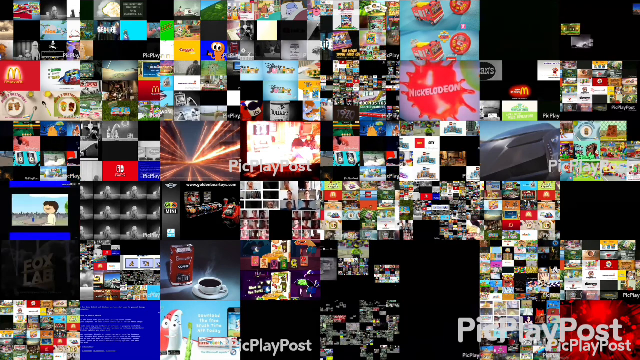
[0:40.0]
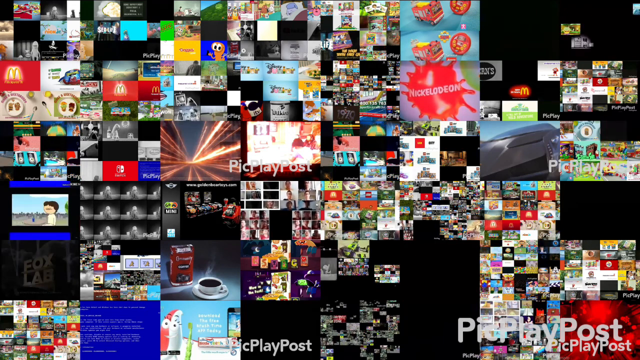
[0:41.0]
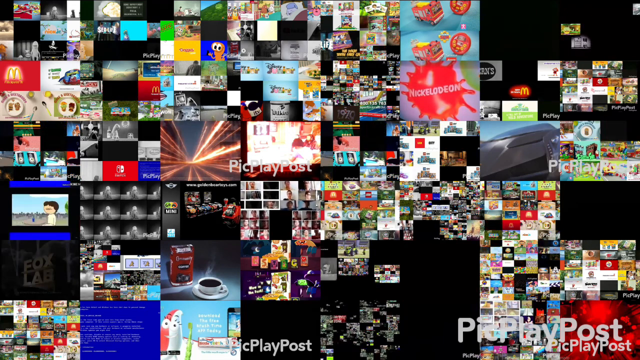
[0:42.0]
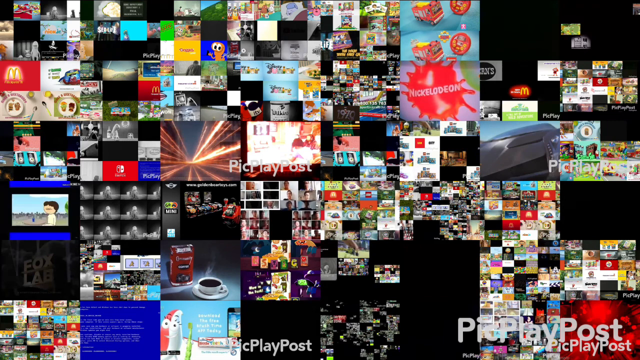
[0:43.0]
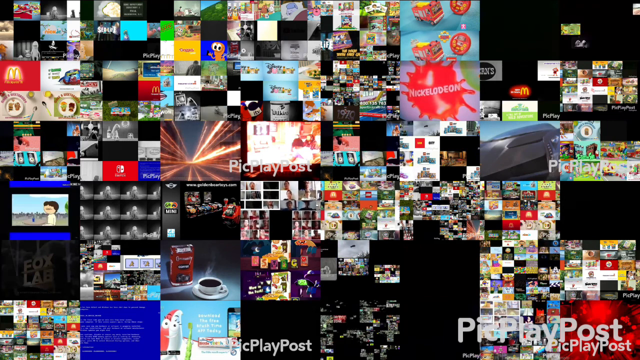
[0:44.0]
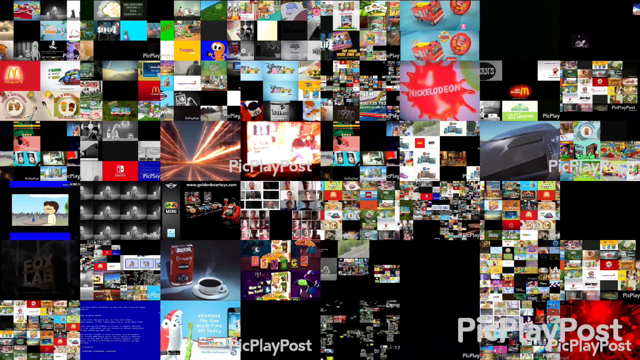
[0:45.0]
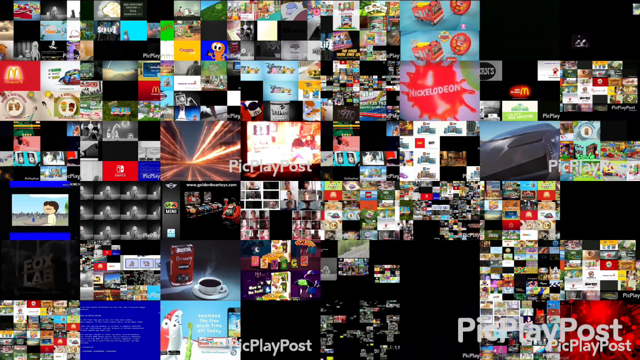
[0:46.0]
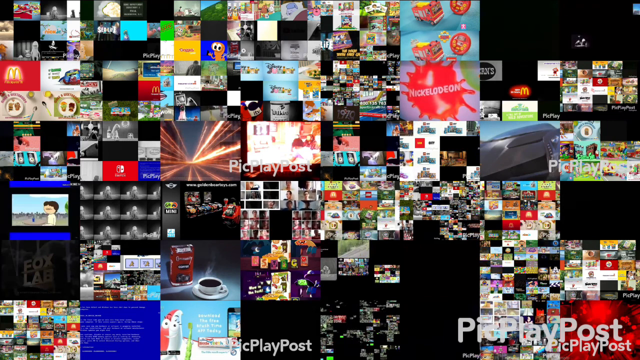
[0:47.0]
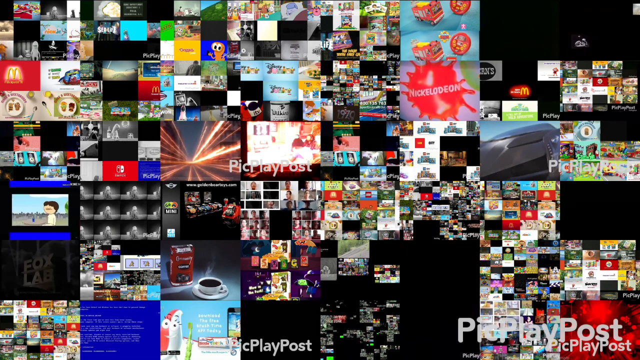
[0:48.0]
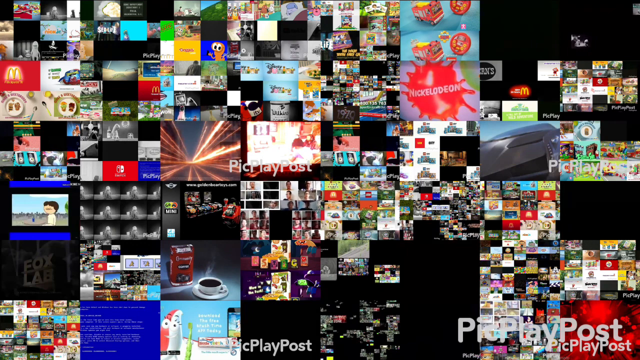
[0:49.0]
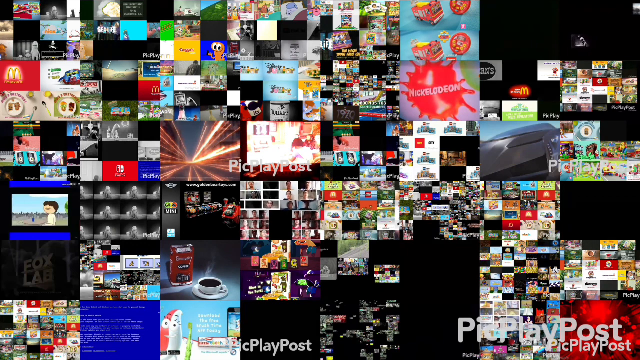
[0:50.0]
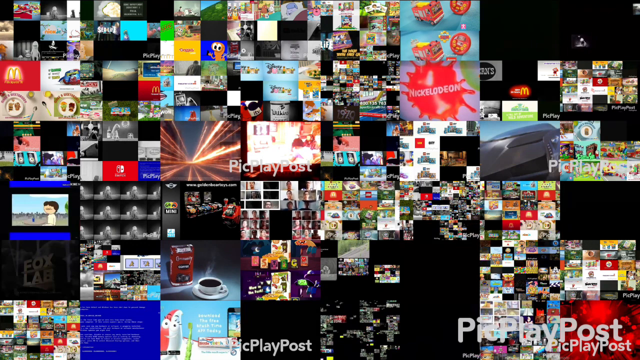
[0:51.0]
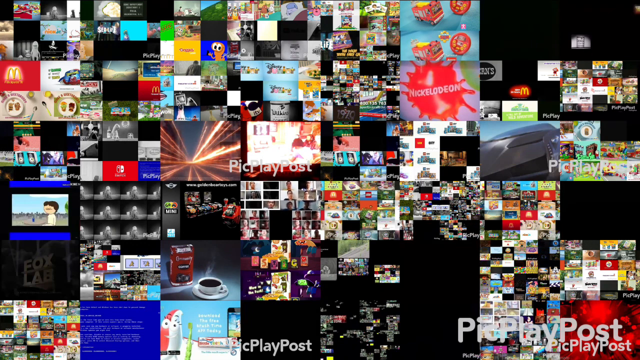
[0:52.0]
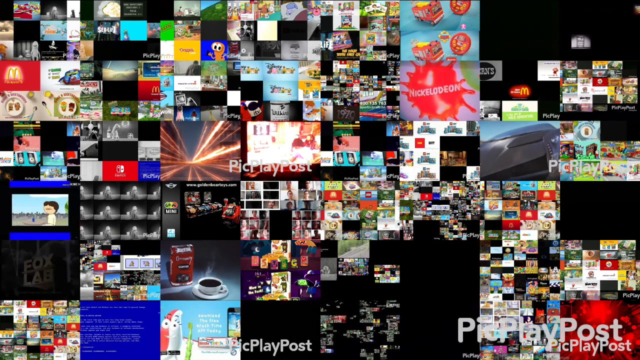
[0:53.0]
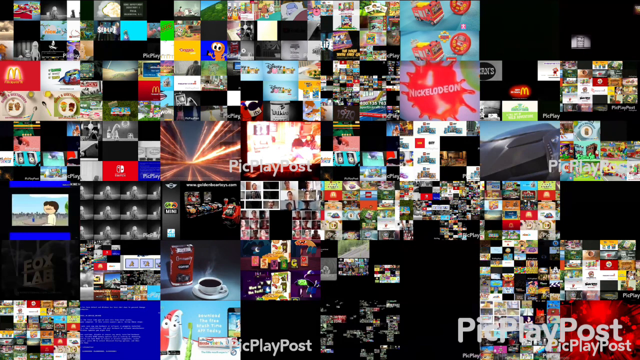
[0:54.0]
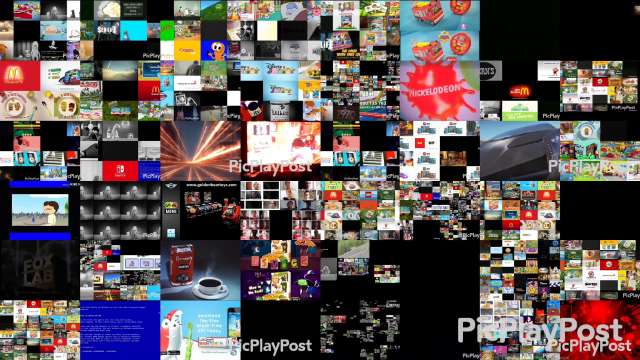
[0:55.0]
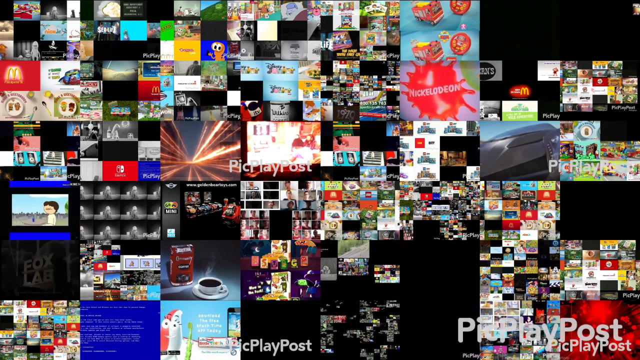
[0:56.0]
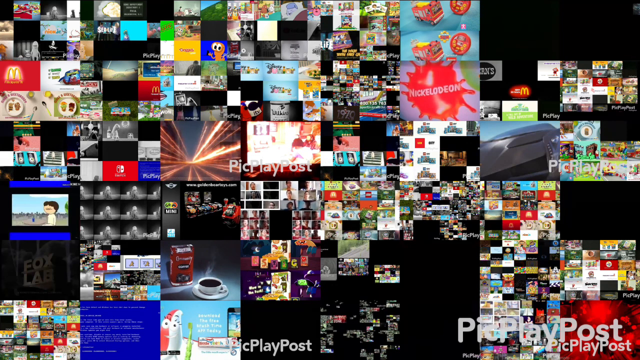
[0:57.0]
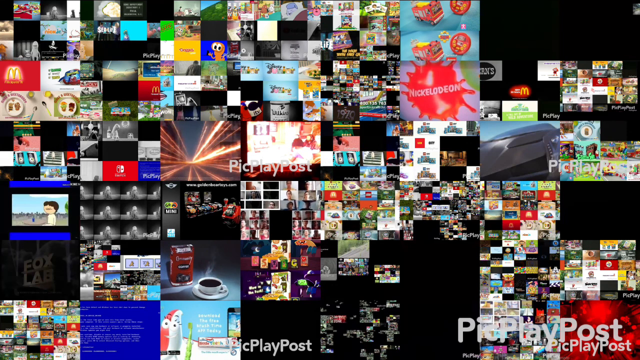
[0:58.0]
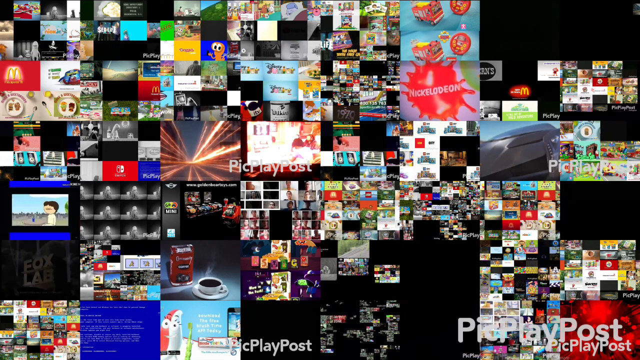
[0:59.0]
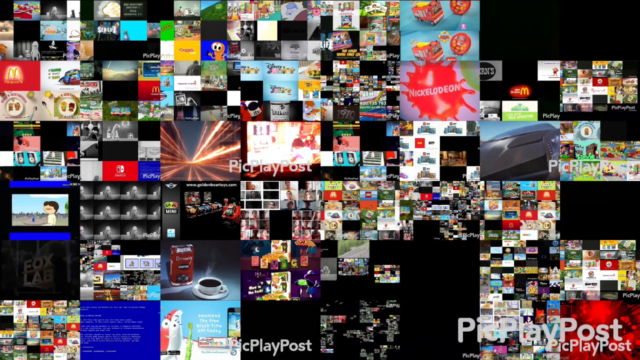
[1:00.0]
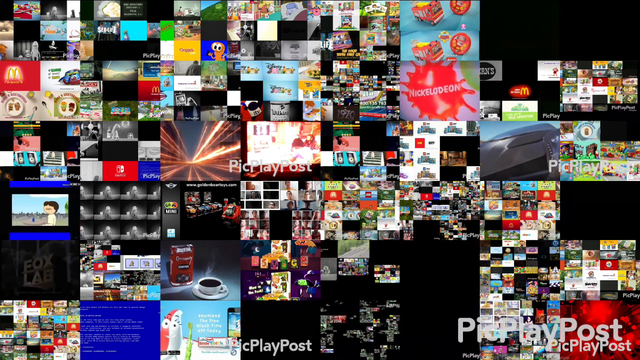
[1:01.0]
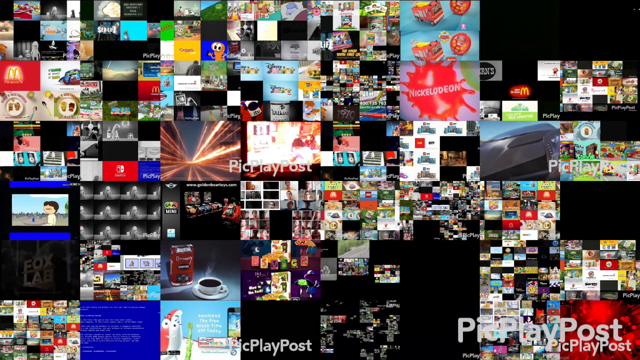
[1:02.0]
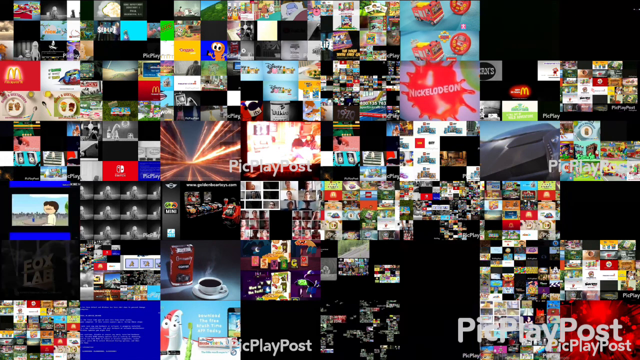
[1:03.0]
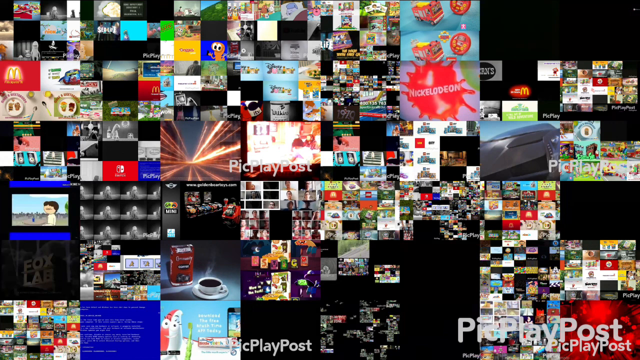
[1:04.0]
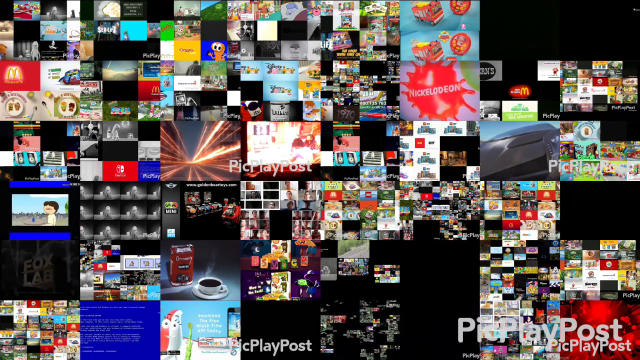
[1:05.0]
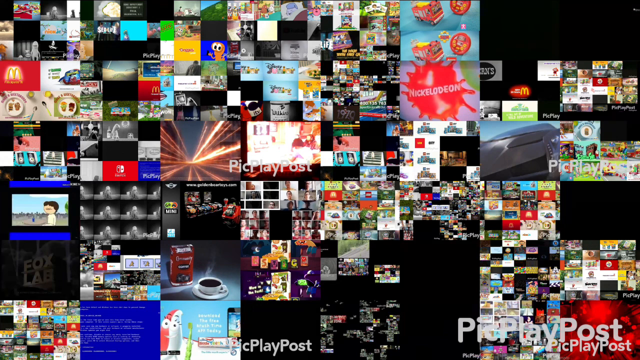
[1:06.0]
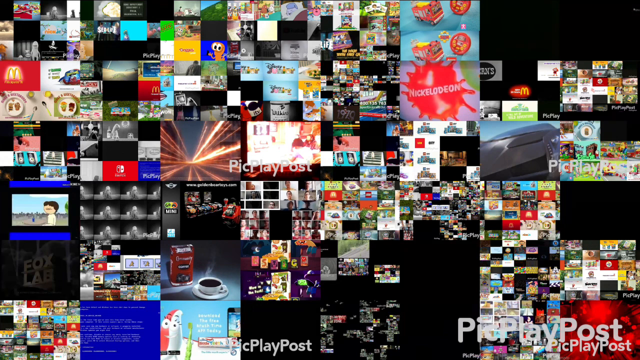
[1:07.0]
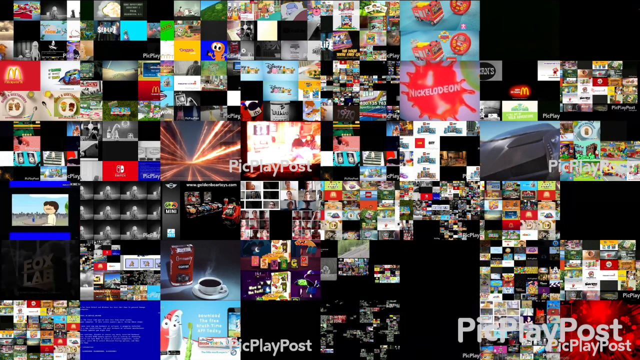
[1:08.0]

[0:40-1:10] In one of the small screens on the left side is an animated toddler wearing a white t-shirt and white trousers, with brown hair, sitting down. This screen is above Fox Lab, which is another screen containing many small screens showing different animations. On the top part of the video, a screen shows a red bus and a red balloon with some yellow accents. There is a yellow worm on the left side, along with different characters from different cartoons. In the middle, below PlayPost, a collage video shows different children, probably talking about toys or movies. To the left of that are toy vehicles that children can operate. On the bottom right is a prominent bold watermark that says "Pic PlayPost."